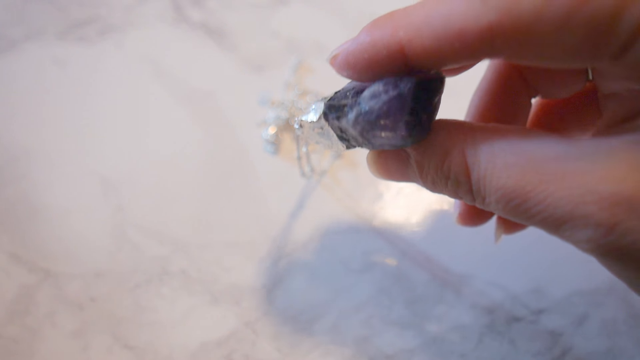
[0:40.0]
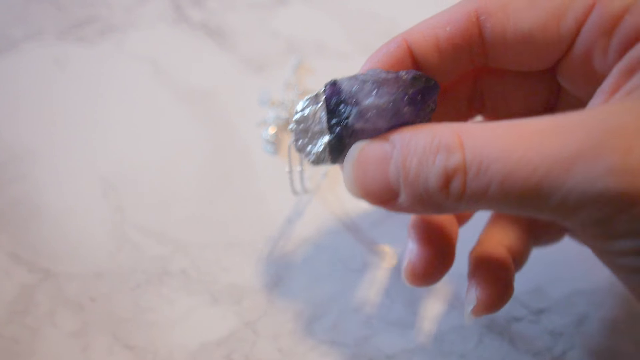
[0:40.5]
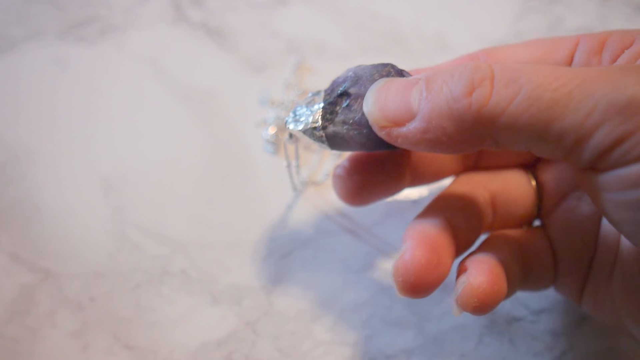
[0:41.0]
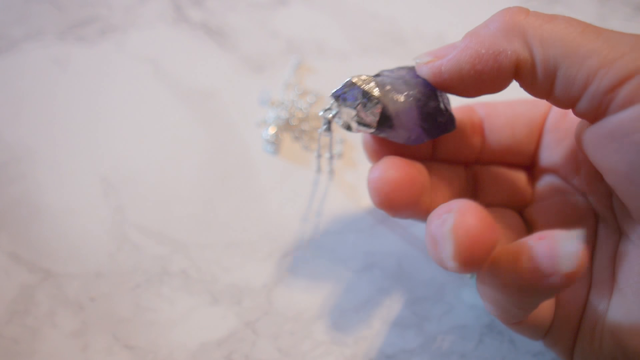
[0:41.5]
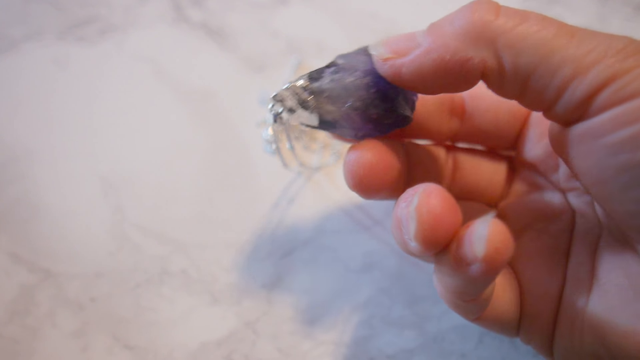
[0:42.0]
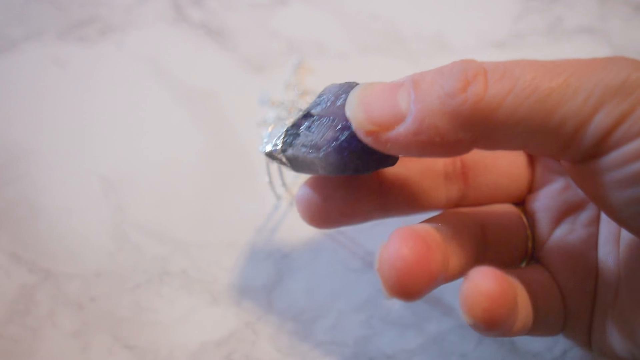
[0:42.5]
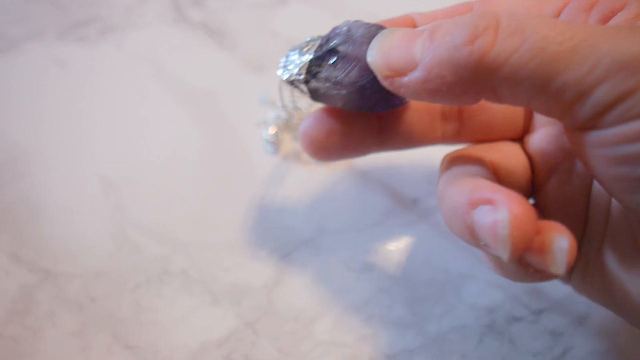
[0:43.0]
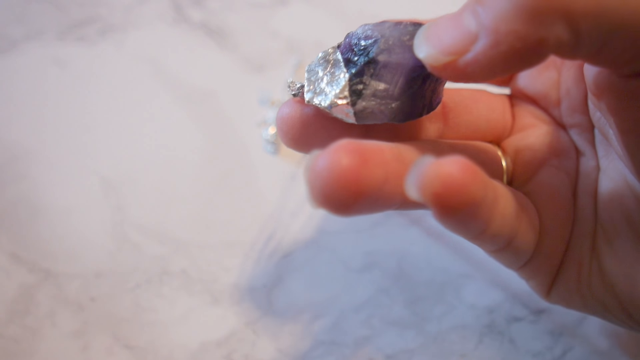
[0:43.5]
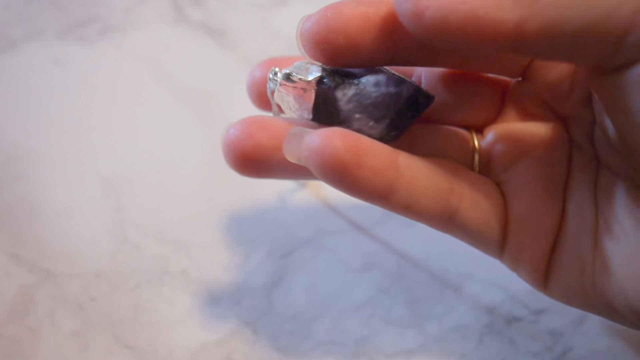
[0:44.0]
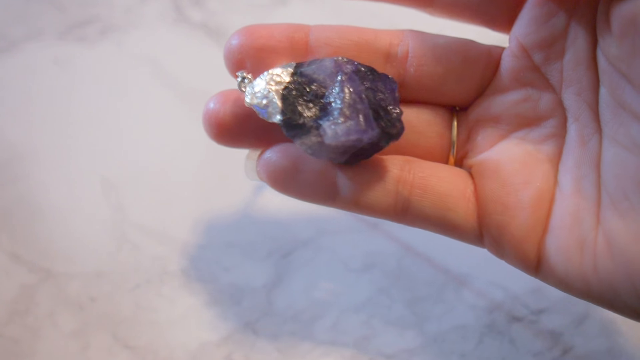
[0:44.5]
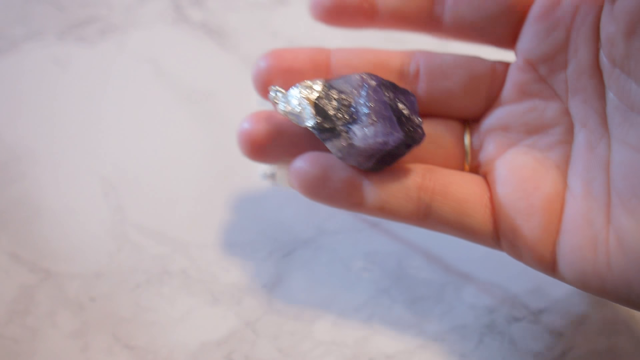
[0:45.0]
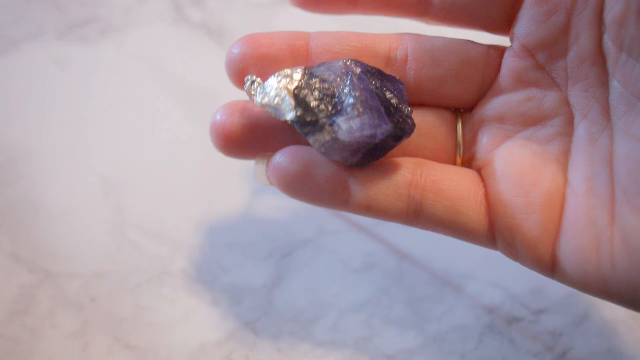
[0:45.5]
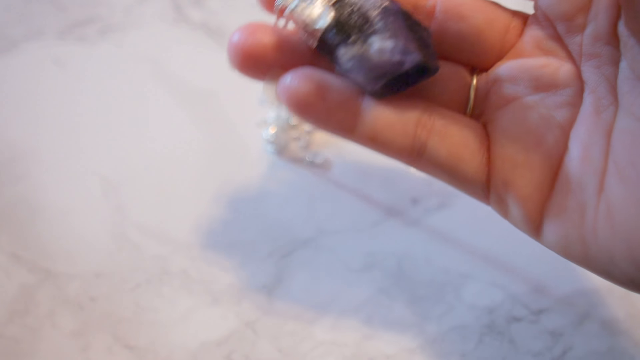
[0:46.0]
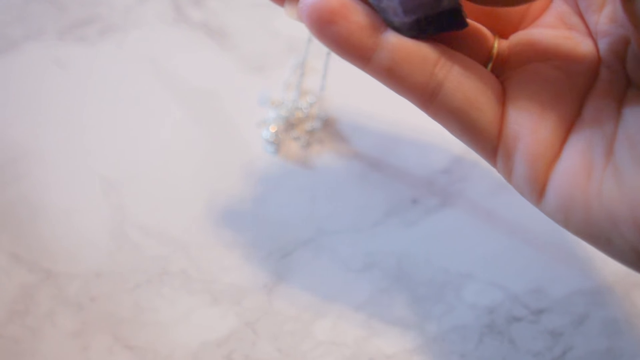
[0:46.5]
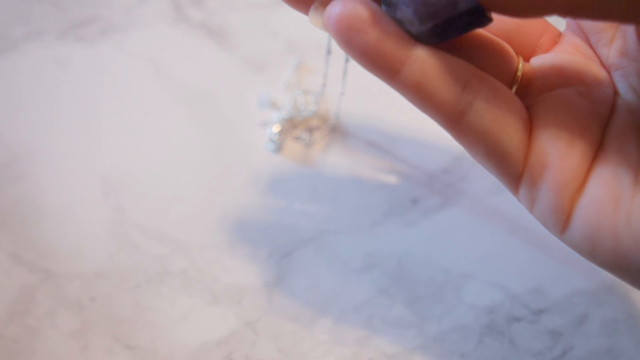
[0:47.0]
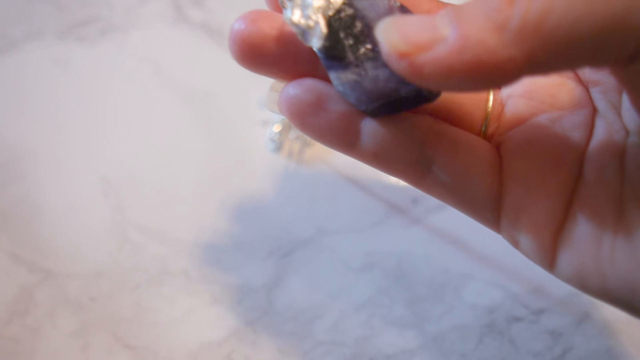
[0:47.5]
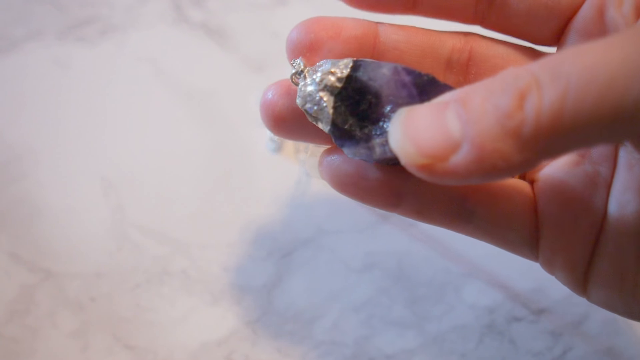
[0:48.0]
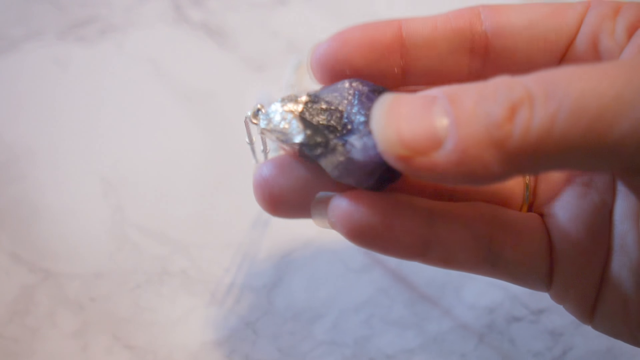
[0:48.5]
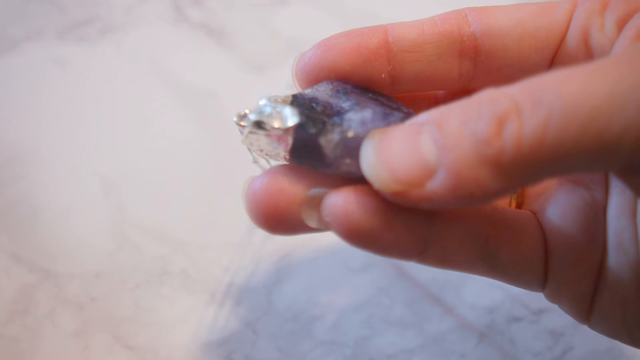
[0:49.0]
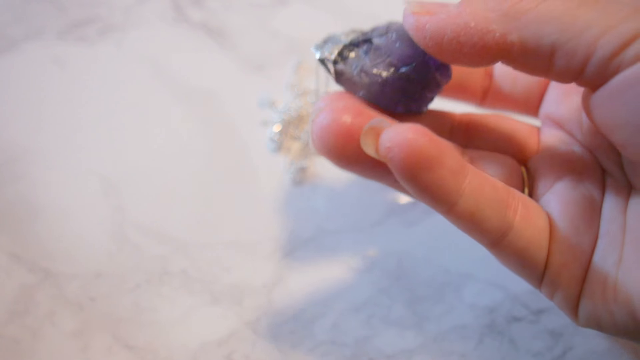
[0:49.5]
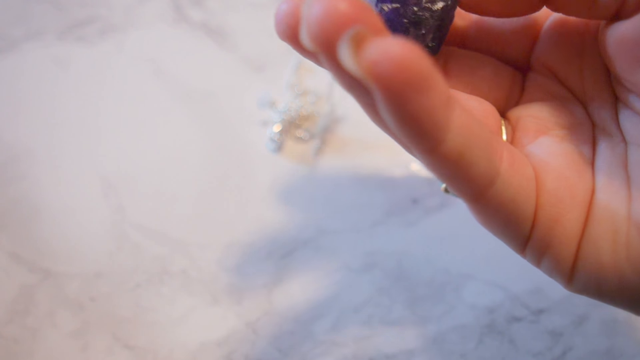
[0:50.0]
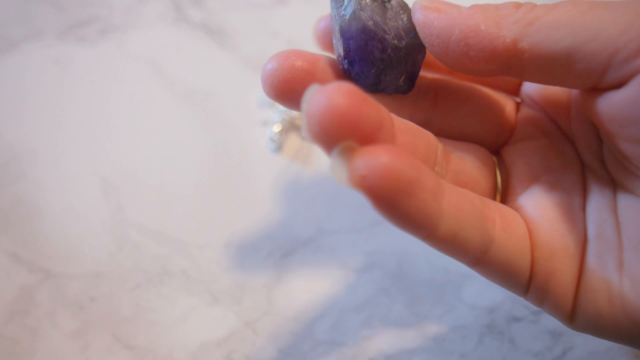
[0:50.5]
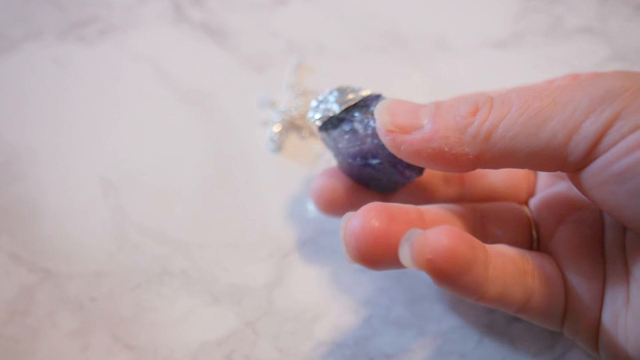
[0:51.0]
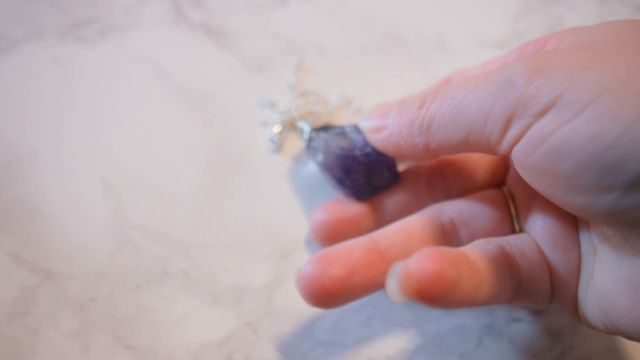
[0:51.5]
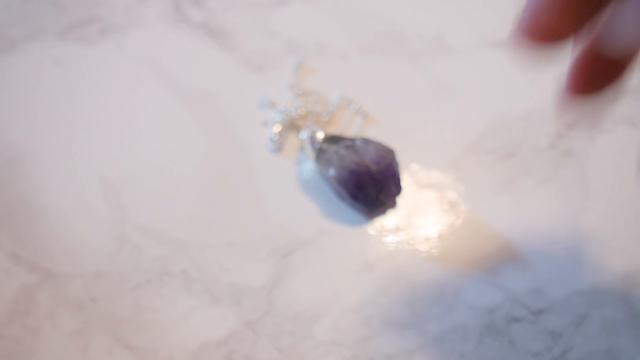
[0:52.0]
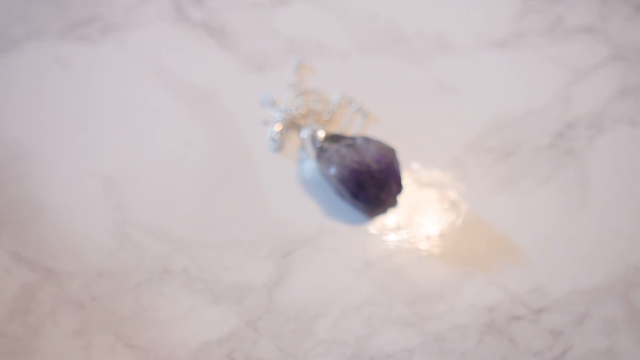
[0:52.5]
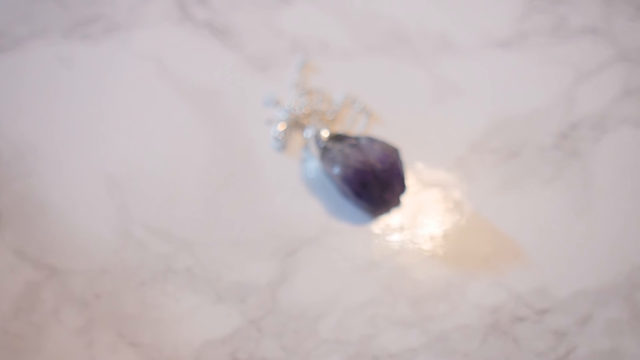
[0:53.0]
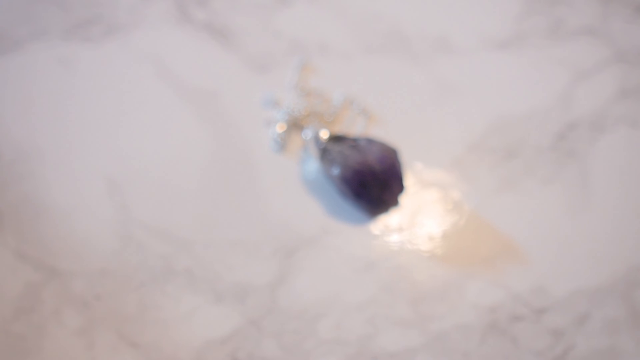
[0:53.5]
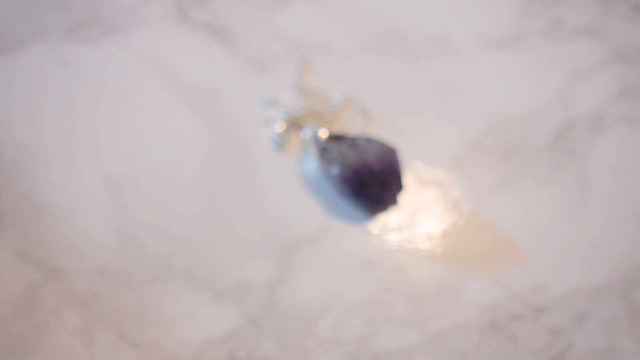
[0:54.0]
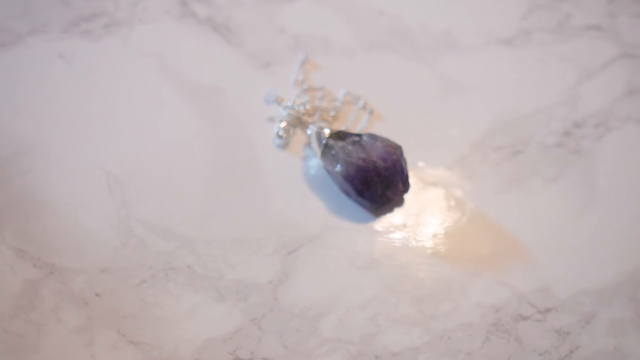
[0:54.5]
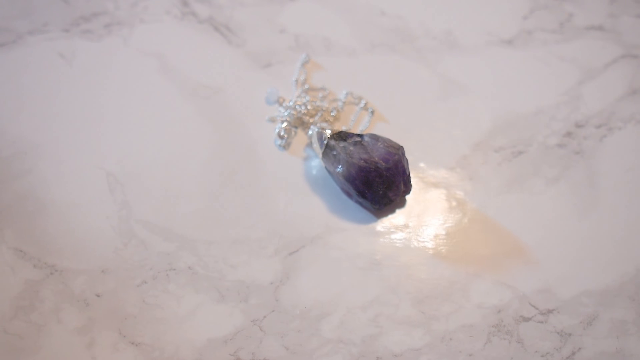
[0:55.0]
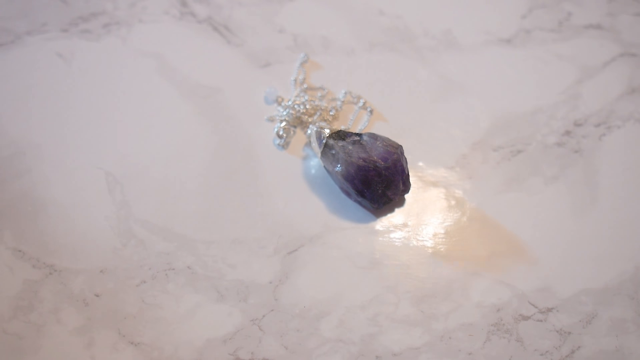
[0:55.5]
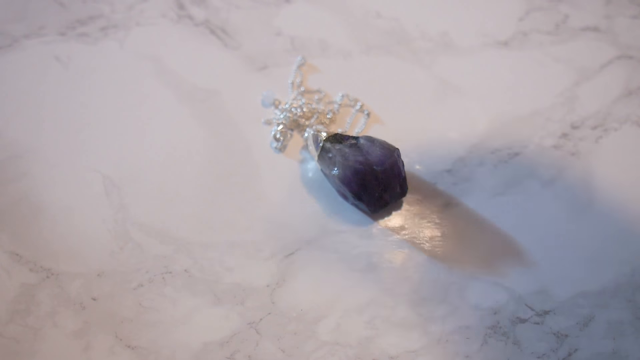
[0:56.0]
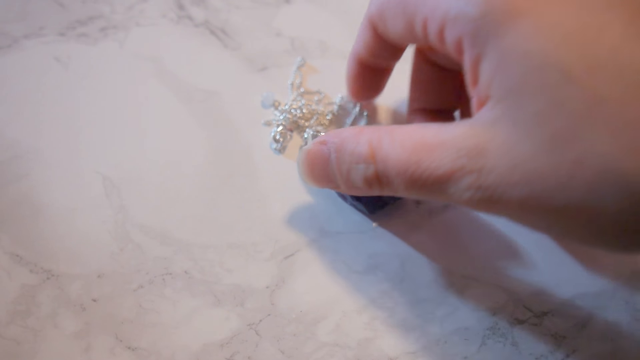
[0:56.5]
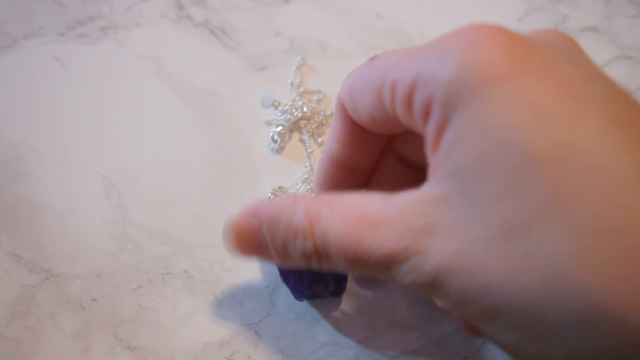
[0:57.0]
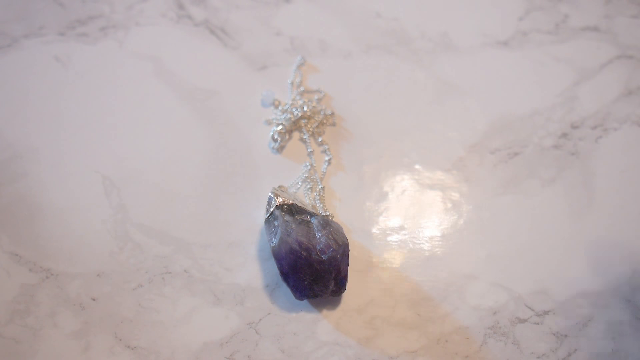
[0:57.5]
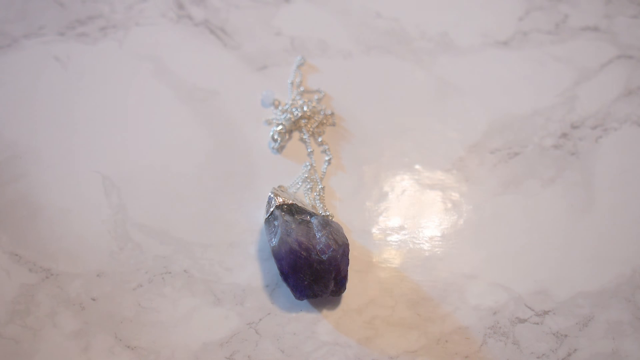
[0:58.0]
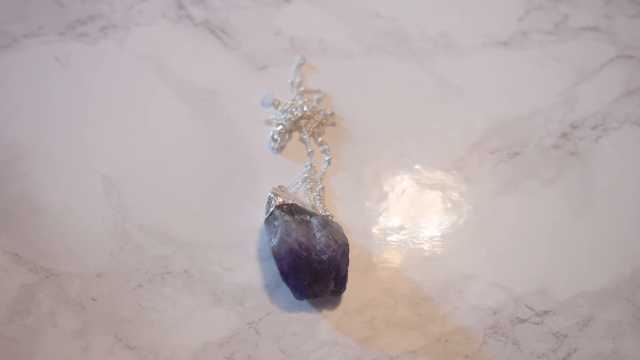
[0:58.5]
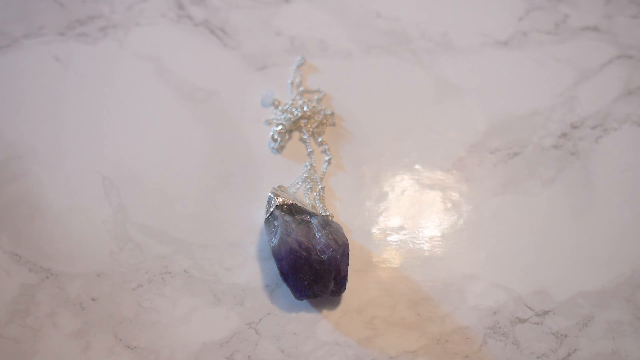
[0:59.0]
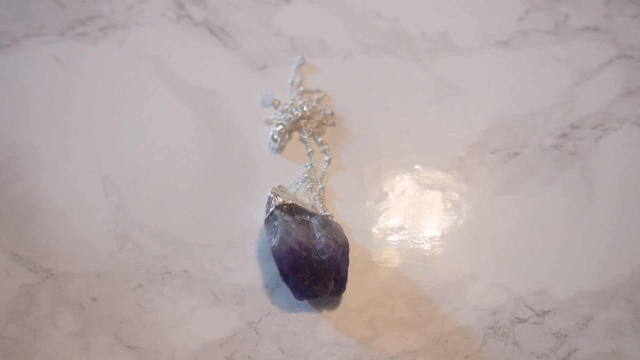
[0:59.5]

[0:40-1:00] A hand holds the necklace, and the person observes it, moving it close to the camera to show its finer details. The person wears a ring on another finger. The necklace is made from a precious stone. He brings the necklace to the camera, then puts it back on the floor, then picks it up again and holds it to the camera at close range, rotating it before the camera.